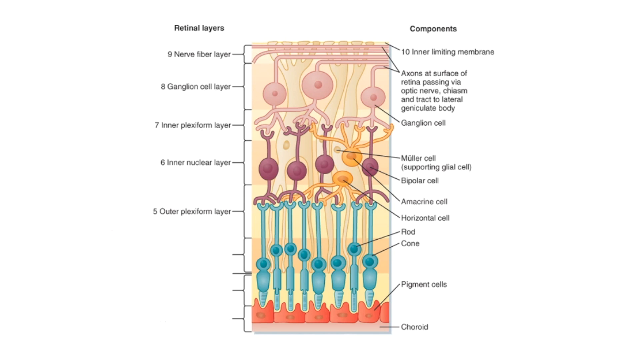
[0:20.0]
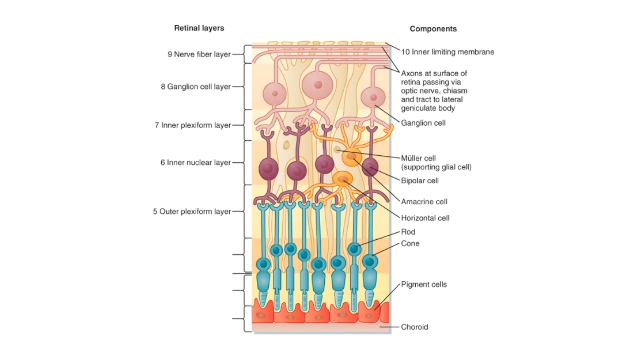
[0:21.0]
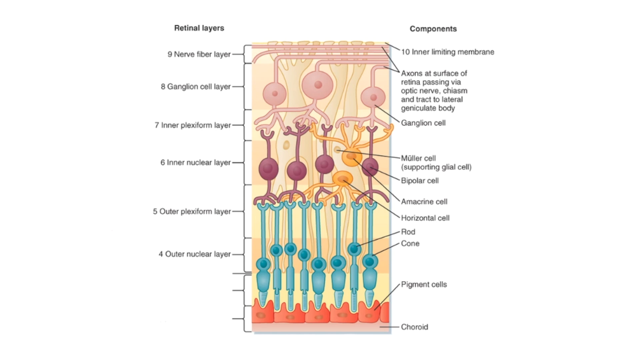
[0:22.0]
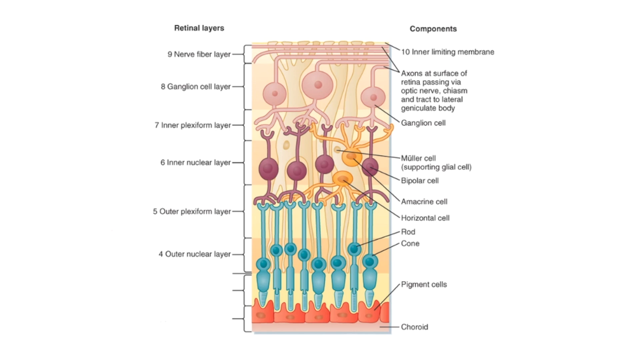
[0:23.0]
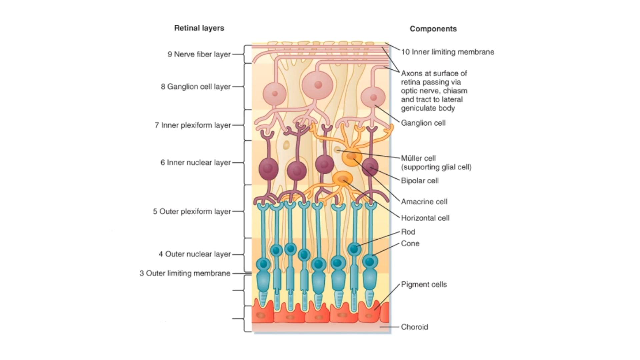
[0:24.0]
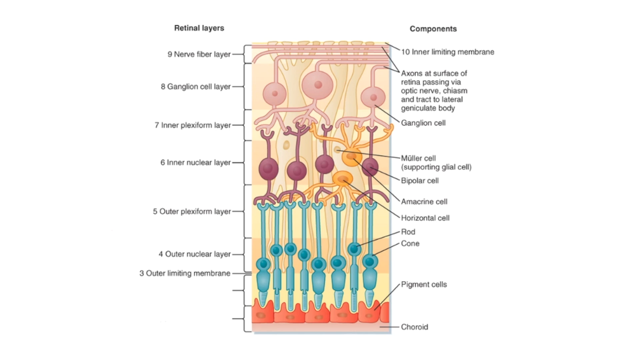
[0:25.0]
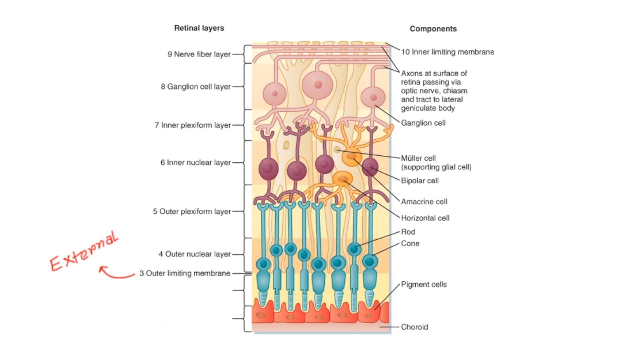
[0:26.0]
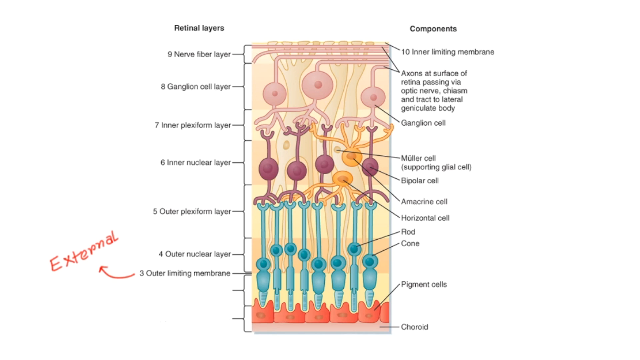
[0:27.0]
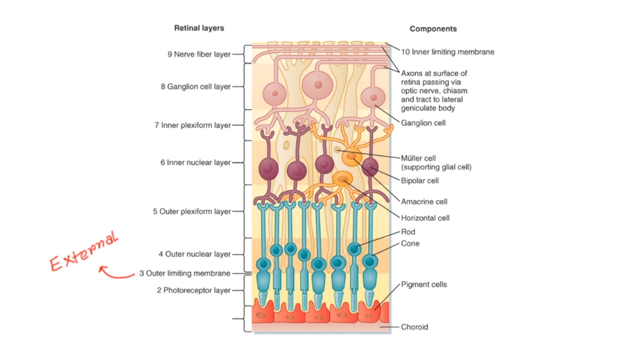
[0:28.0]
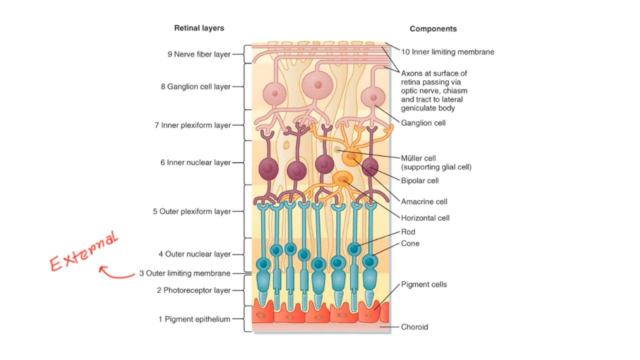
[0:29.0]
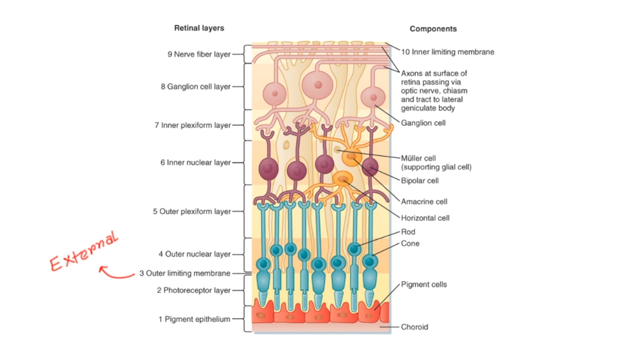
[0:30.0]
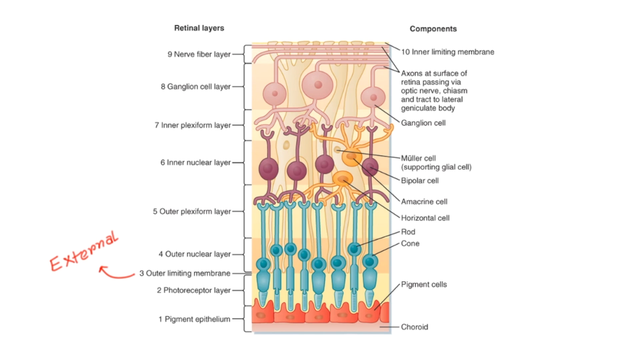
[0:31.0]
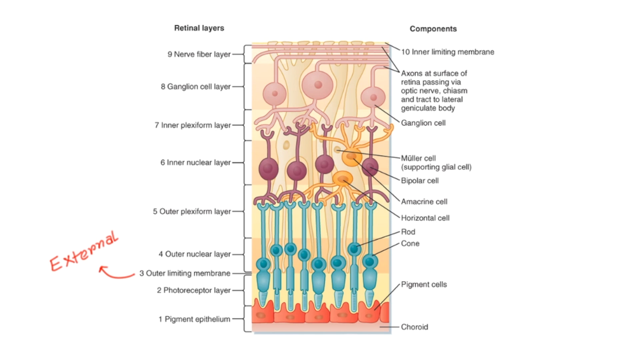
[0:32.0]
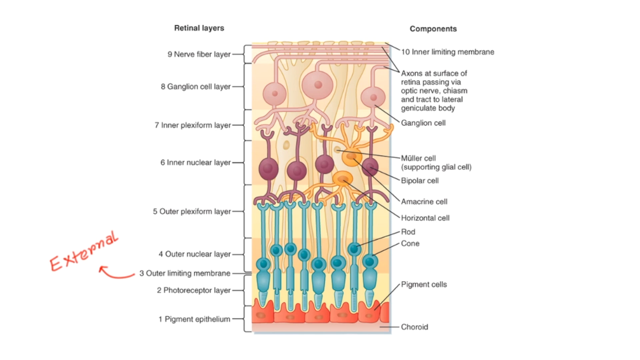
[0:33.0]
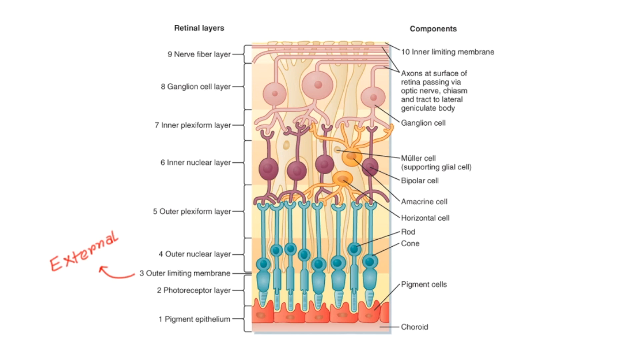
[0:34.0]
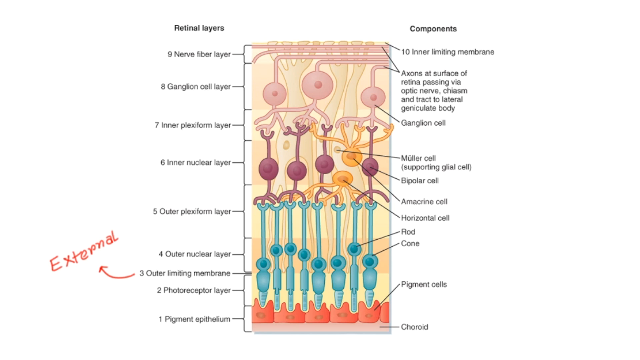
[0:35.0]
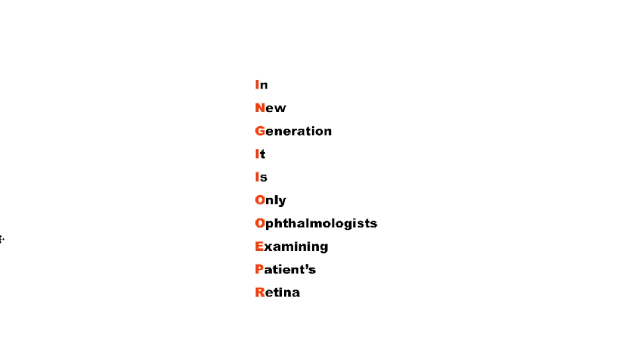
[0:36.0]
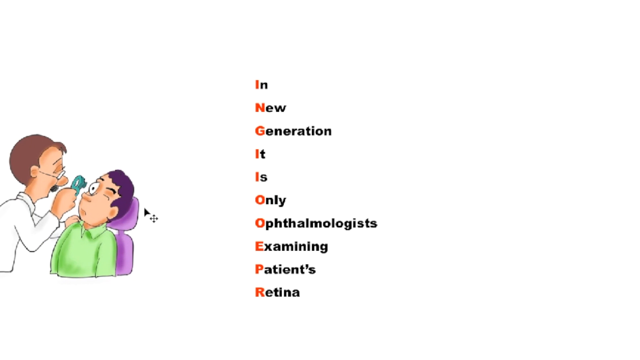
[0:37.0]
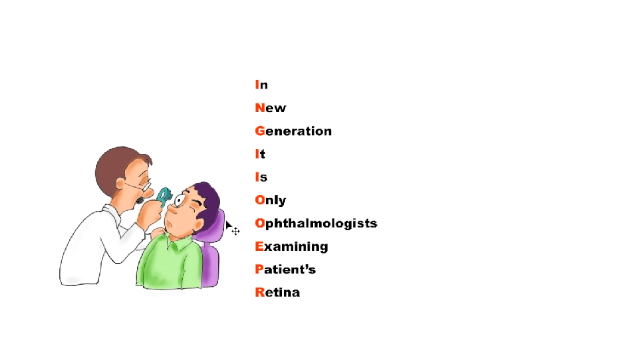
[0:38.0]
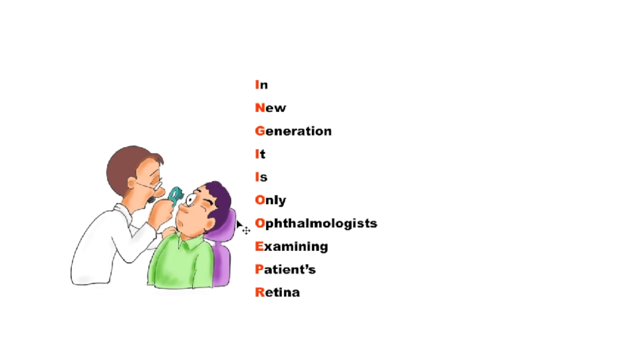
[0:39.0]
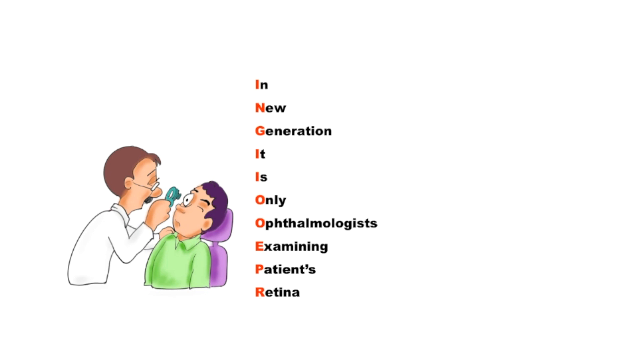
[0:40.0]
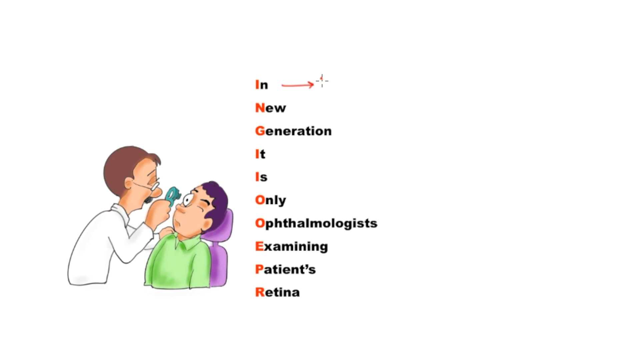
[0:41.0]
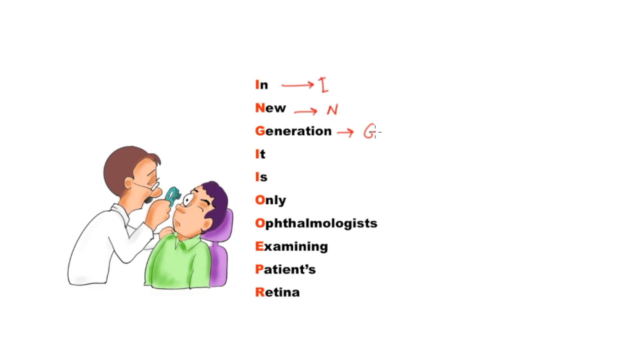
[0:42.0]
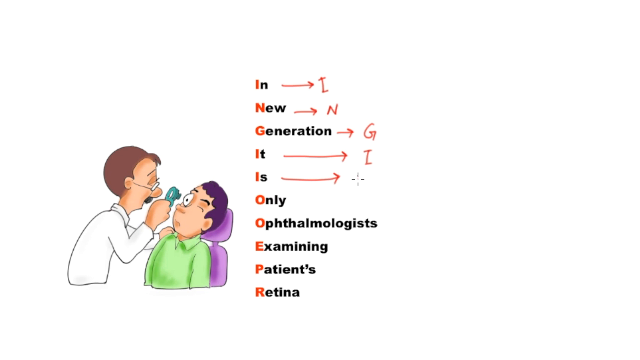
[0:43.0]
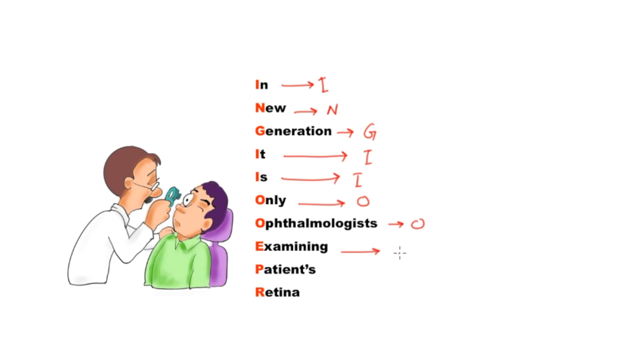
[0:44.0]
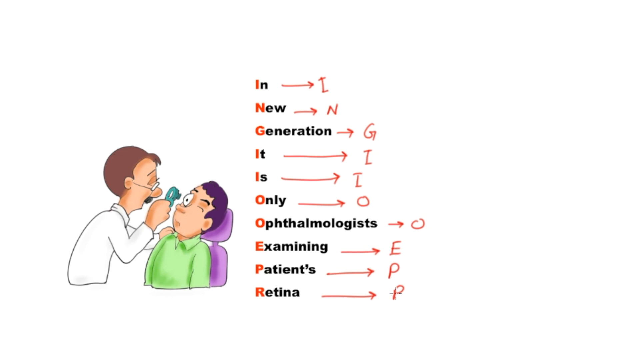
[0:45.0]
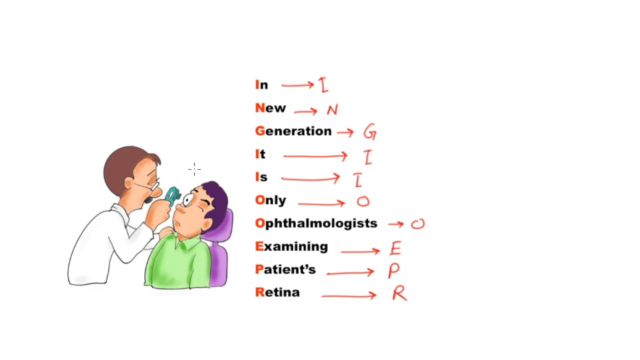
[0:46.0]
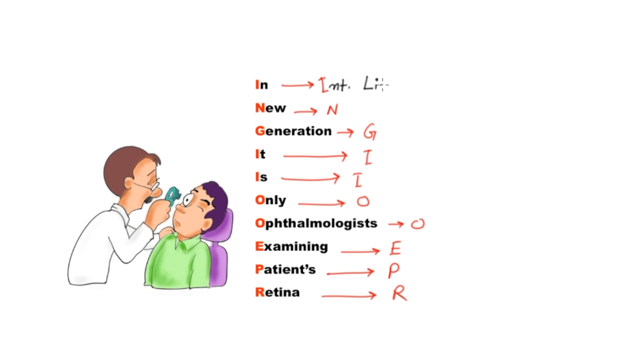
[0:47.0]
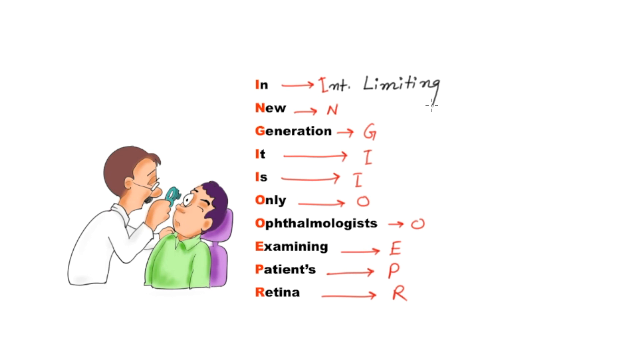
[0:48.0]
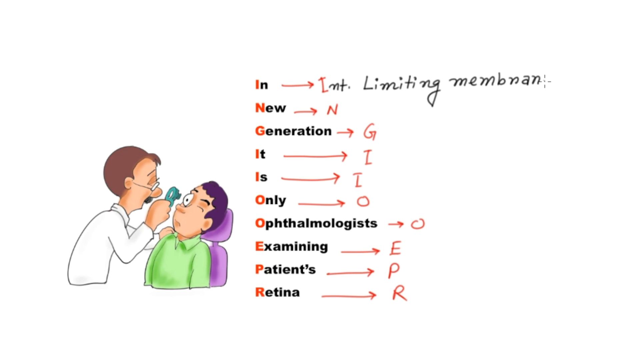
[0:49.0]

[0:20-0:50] A diagram that looks like it shows the layers of the retina is a vertical rectangle in the middle of the frame with a white background. It appears to contain bulbs and nerves running from top to bottom: pink bulbs at the top, purple bulbs below them in the middle, what look like long teal nerves with bulbs at the bottom, and orange blobs at the bottom. On the right side there is a lot of black text with lines pointing to different components of the diagram; from top to bottom it reads "components", "10 inner limiting membrane", "axons at surface of retina passing via optic nerve chiasm and tract to lateral geniculate body", "supporting glial cell", "bipolar cell", "amacrine cell", "horizontal cell", "rod", "cone", "pigment cell", and at the bottom "choroid", where the diagram is pale pink. At the top of the left side it reads "retinal layers". Two lines seem to point out from the top and bottom of the layer, go down, meet in the middle, and continue to the left as one line. Black text from top to bottom reads "9 nerve fiber layer", "8 ganglion cell layer", "7 inner plexiform layer", "6 inner nuclear layer" and "5 outer plexiform layer". More black text then appears below: "4 outer nuclear layer", then "3 outer limiting membrane". To the left of "3 outer limiting membrane" a red arrow points left, with handwritten red text reading "external". Below come "2 photoreceptor layer" and "1 pigment epithelium". The video then transitions to a new screen with a white background and text running down the middle, the first letter of each line in red and the rest in black, reading from top to bottom "in new generation, it is only ophthalmologists examining patient's retina". What looks like a mouse comes from the left side and drags what looks like a picture to the right, next to the text. The picture seems to show a doctor in a white coat holding up some sort of lens and looking through it; on the right a patient sits on a purple chair with his left eye closed and his right eye open, and the doctor looks into his right eye. The mouse drags the picture to the bottom left, then draws a red right arrow and writes the first letter of each word down the list: I, N, G, I, I, O, O, E, P and R. From the I at the top it writes "int limiting membrane", and from the N below it writes "nerve".